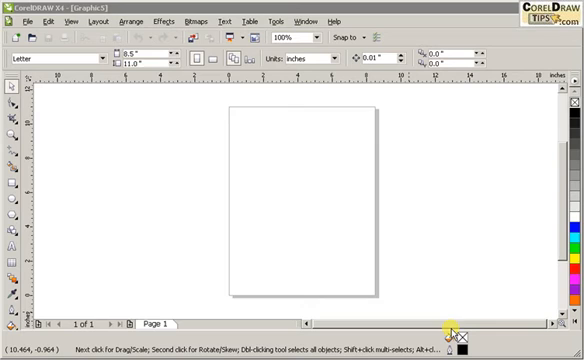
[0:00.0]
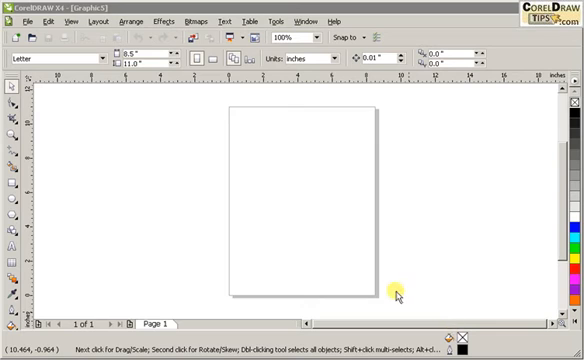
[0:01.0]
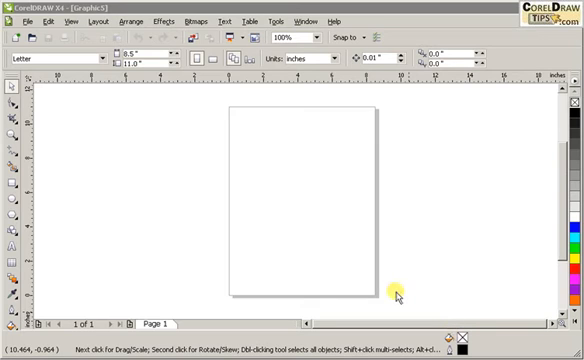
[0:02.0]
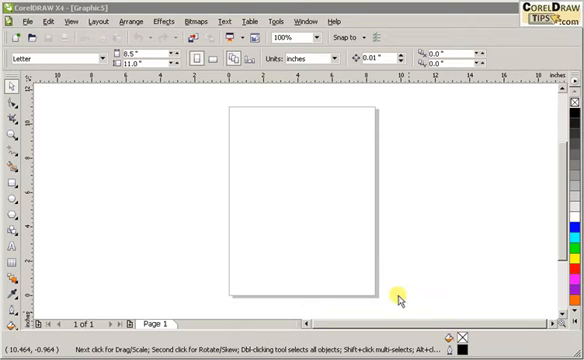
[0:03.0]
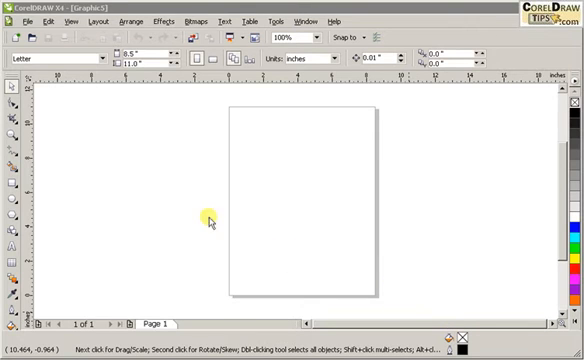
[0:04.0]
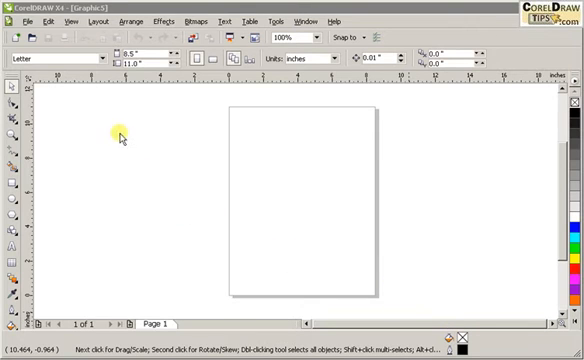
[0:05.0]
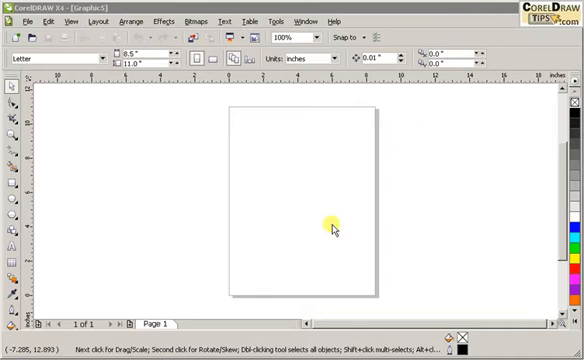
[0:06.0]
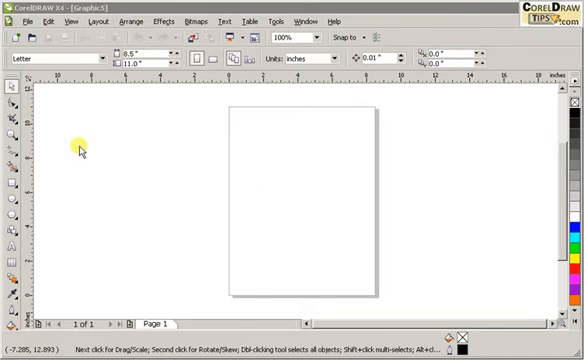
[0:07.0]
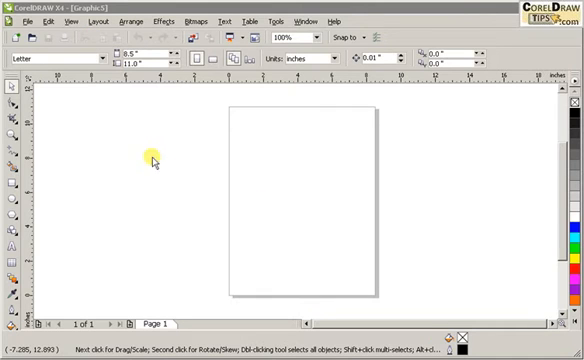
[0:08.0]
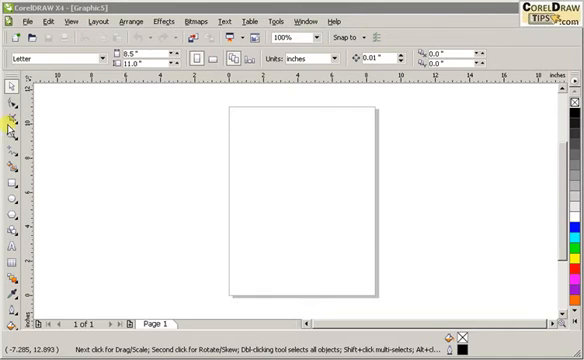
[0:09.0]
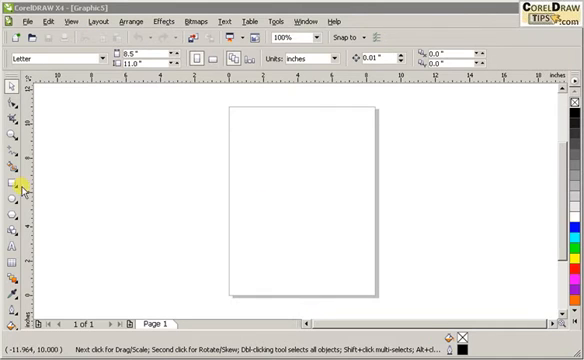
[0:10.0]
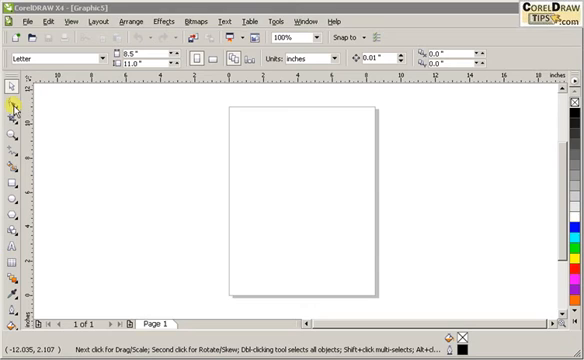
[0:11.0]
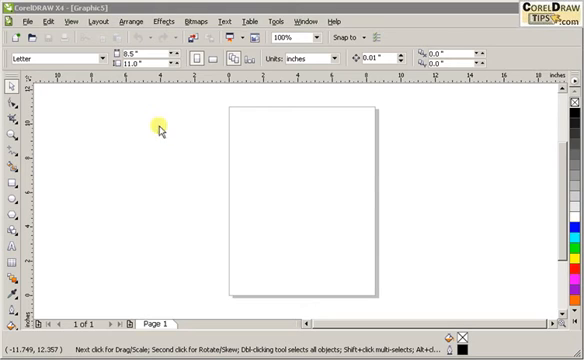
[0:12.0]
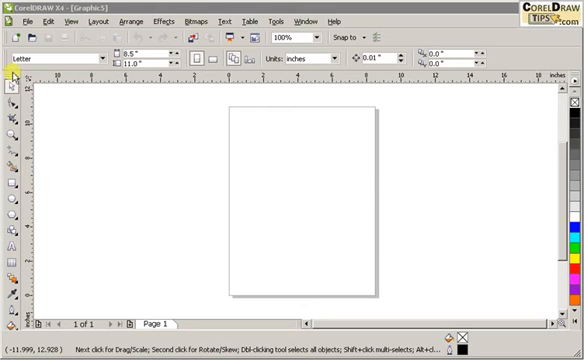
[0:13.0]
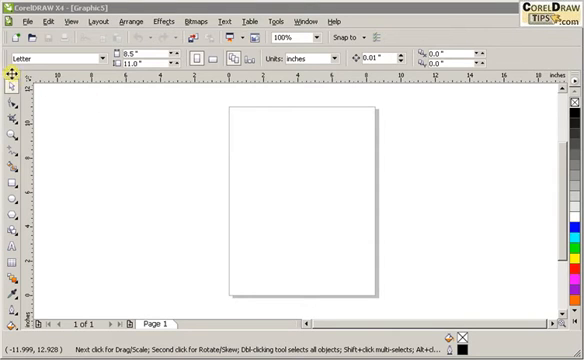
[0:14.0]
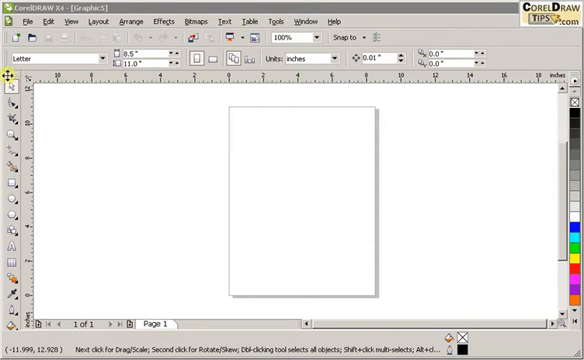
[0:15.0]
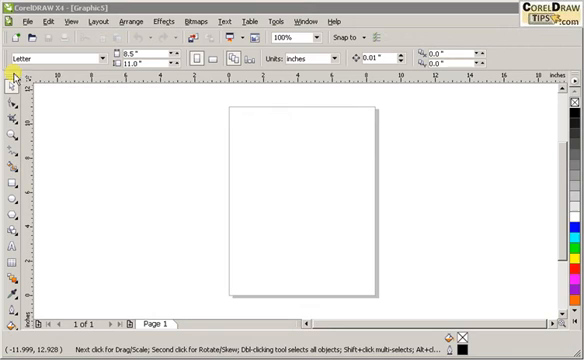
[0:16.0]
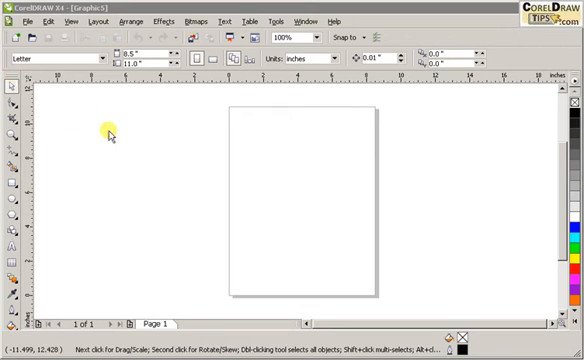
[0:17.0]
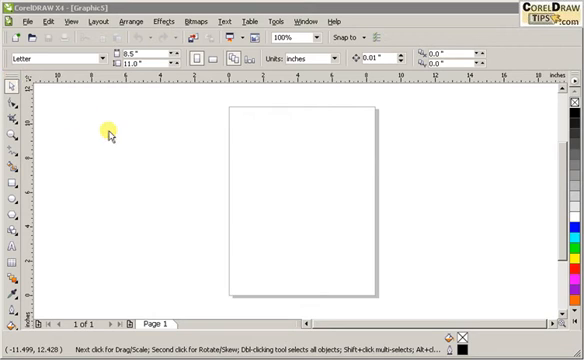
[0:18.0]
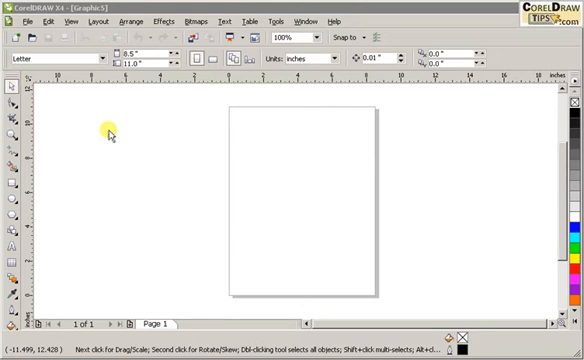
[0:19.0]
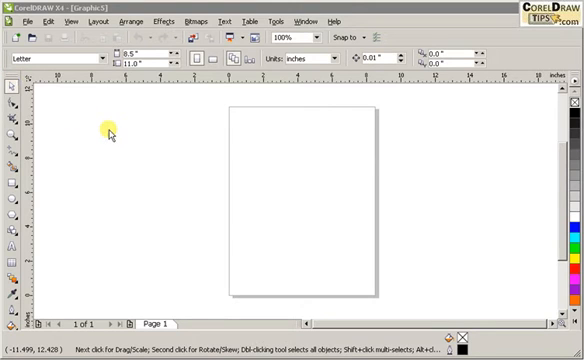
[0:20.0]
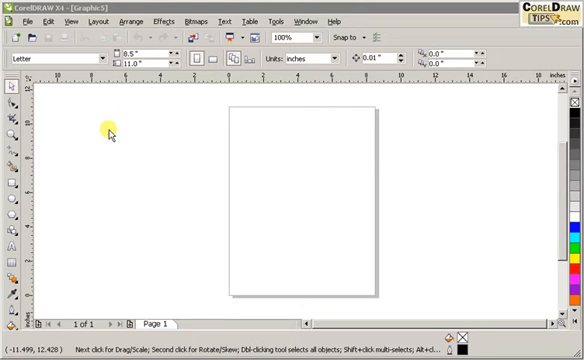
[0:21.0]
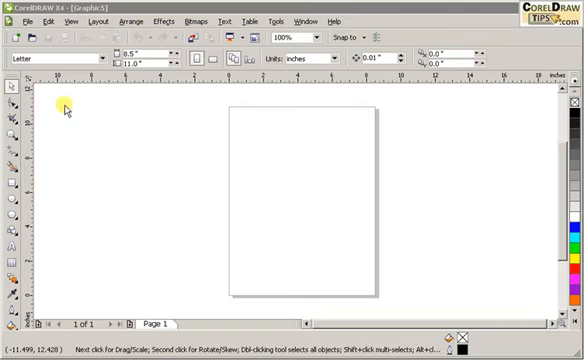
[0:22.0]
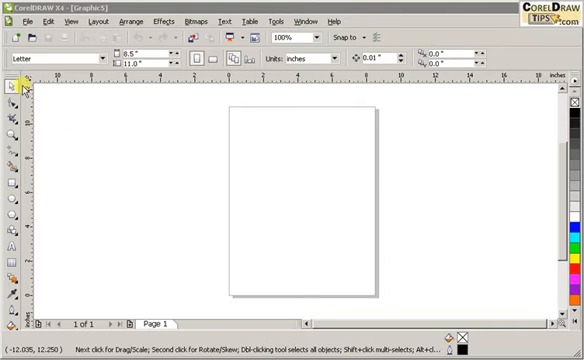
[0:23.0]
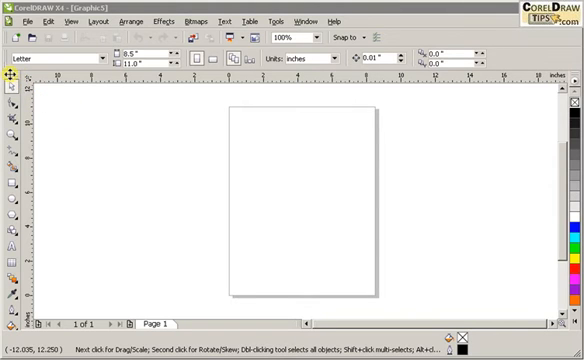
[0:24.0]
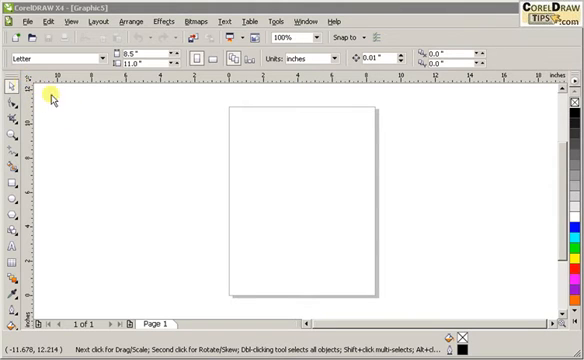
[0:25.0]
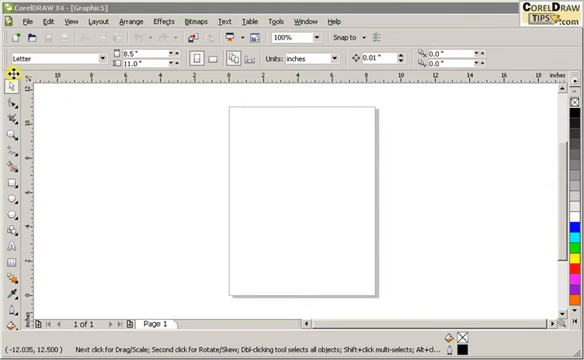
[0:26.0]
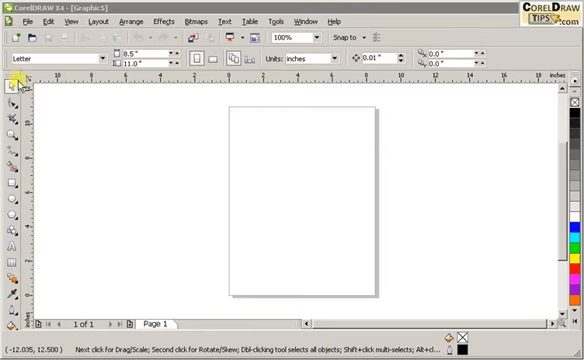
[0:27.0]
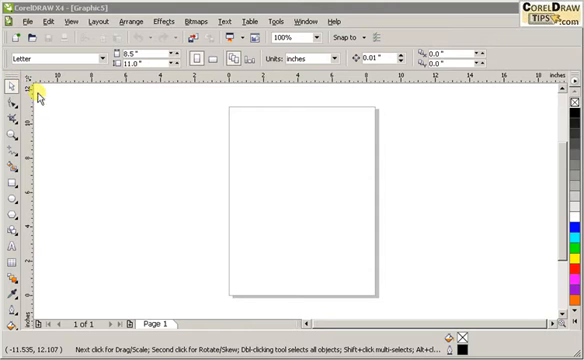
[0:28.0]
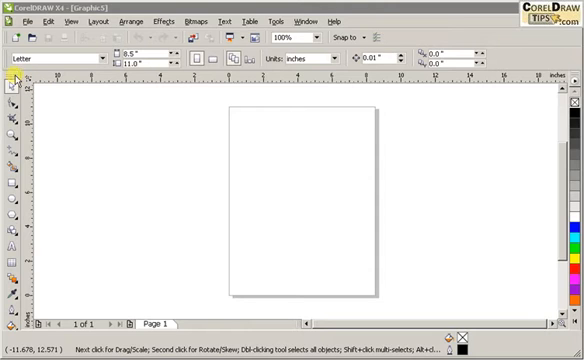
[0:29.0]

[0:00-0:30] The video opens on a bordered window. At the top left there is a reference to CorelDRAW, and in the top right corner is "CorelDRAWtips.com". The C and the D are in a black block font, while the other letters of CorelDRAW are smaller. "Tips" is in a gray box below, and between "tips" and ".com" a short yellow arrow points to "tips". A single gray menu bar across the top reads, from left to right, "file", "edit", "View", "Layout", "Arrange", "Effects", "Bitmaps", "Text", "Table", "Tools", "Window" and "Help". Below it is another toolbar with a few active symbols that stretches over halfway across the screen. Along this bar is "100%", indicating the size of the screen, and to the right of that is "Step To" with an arrow signifying a dropdown menu.